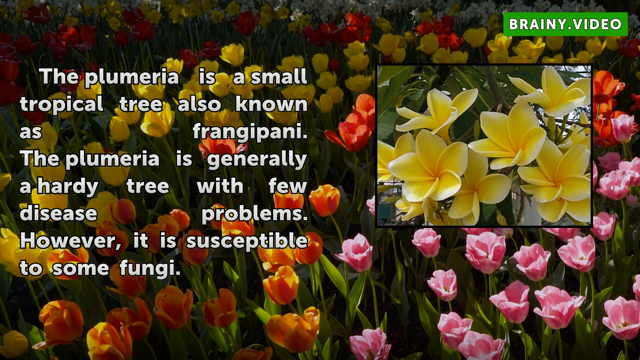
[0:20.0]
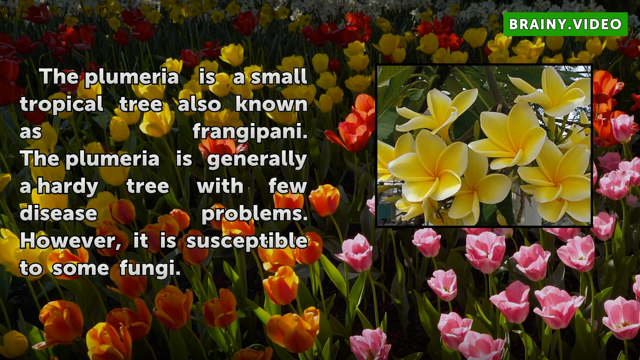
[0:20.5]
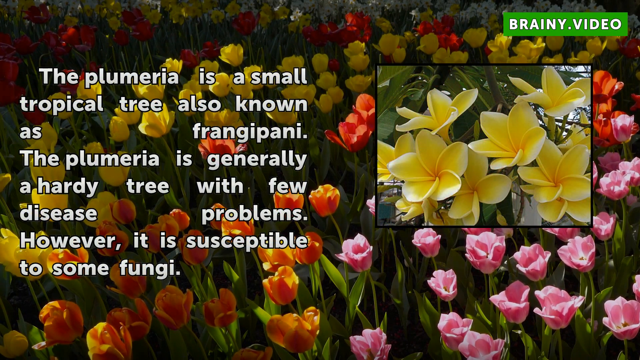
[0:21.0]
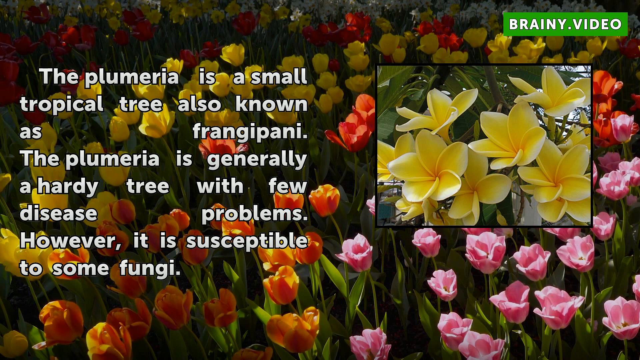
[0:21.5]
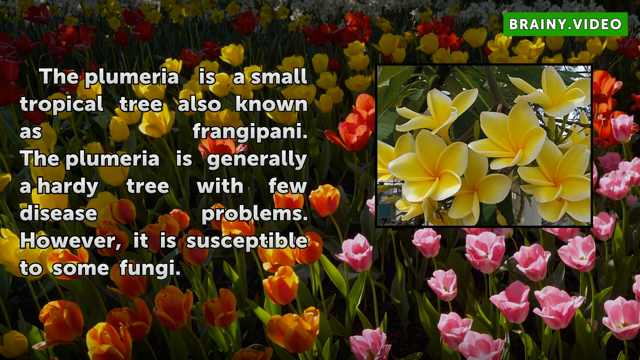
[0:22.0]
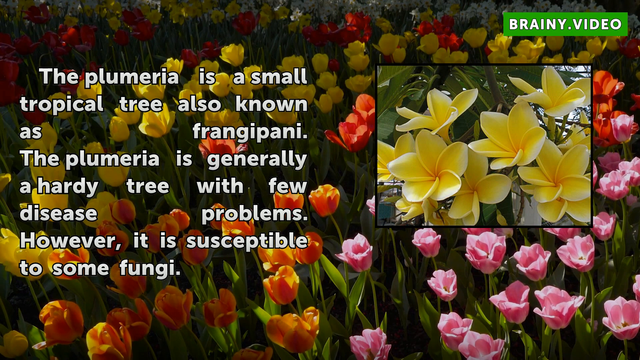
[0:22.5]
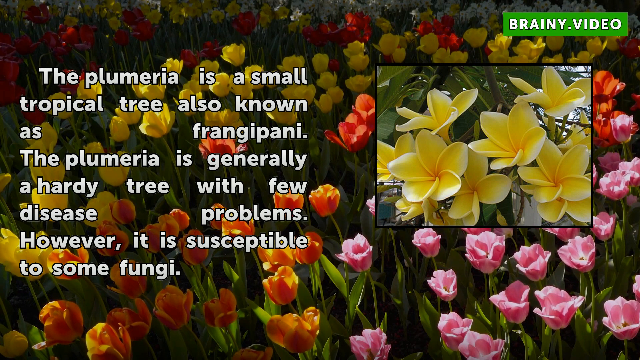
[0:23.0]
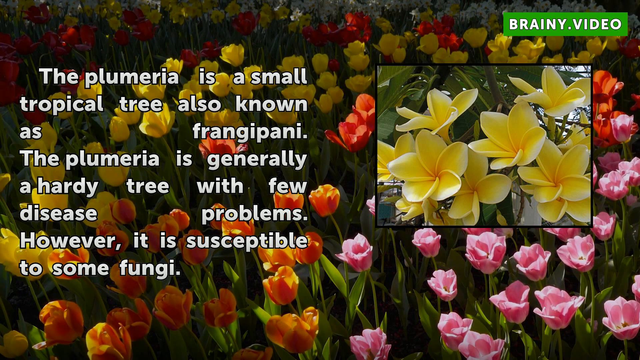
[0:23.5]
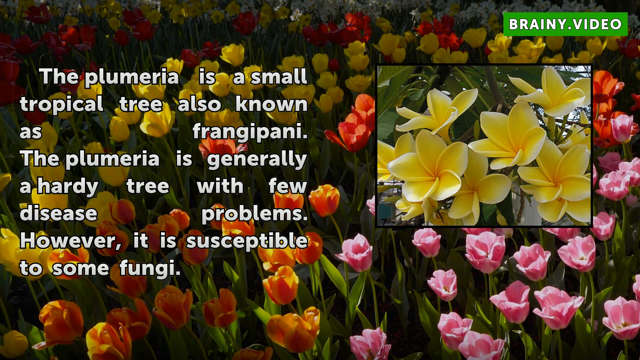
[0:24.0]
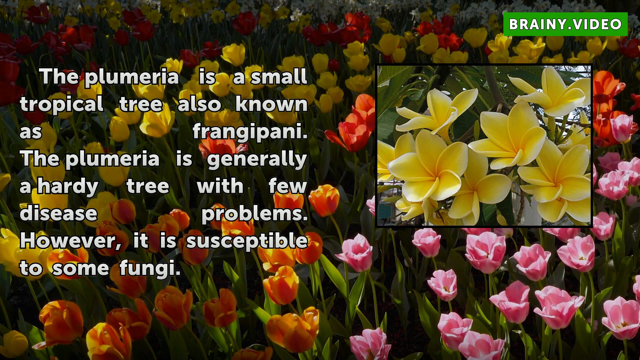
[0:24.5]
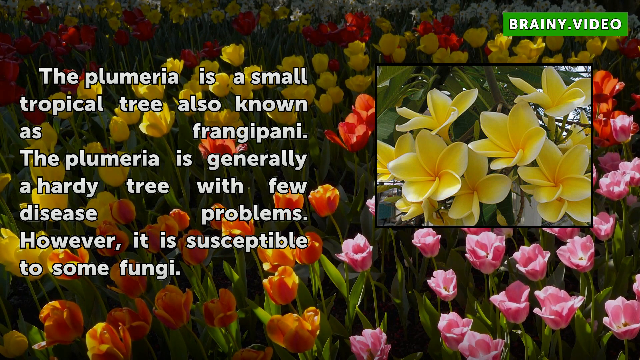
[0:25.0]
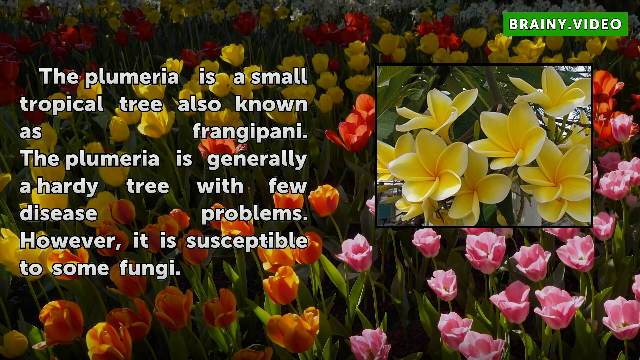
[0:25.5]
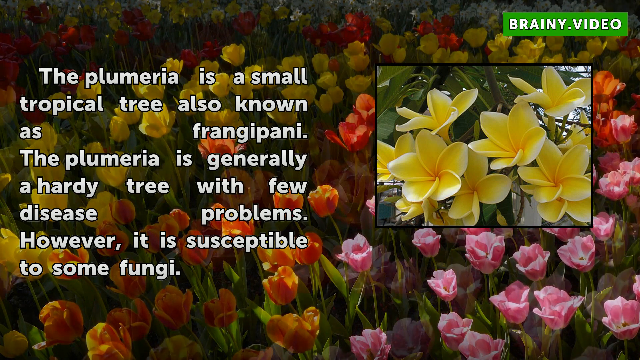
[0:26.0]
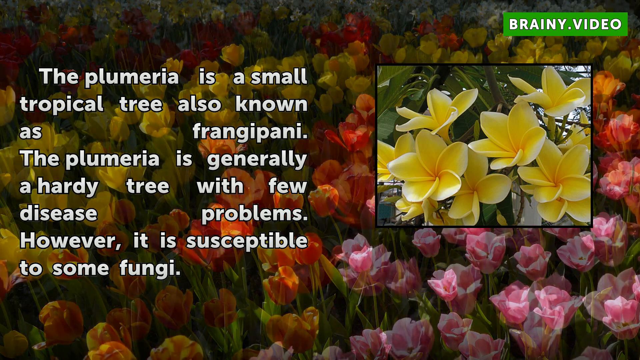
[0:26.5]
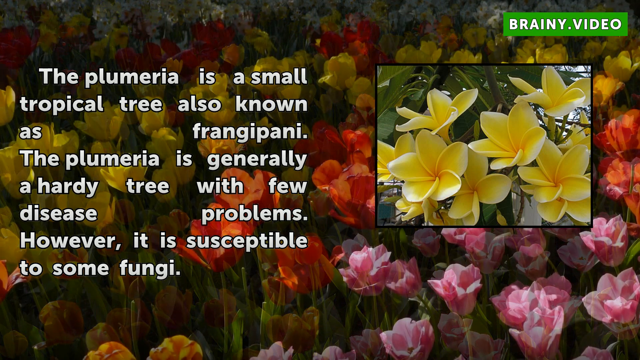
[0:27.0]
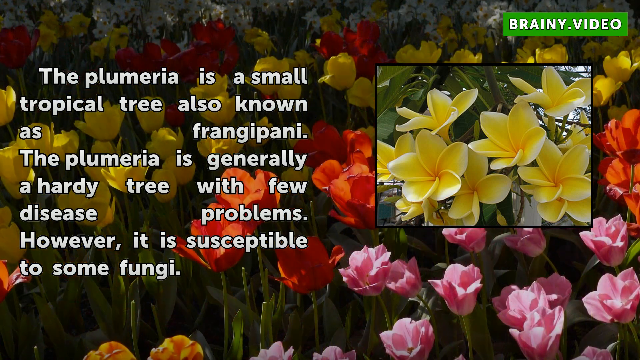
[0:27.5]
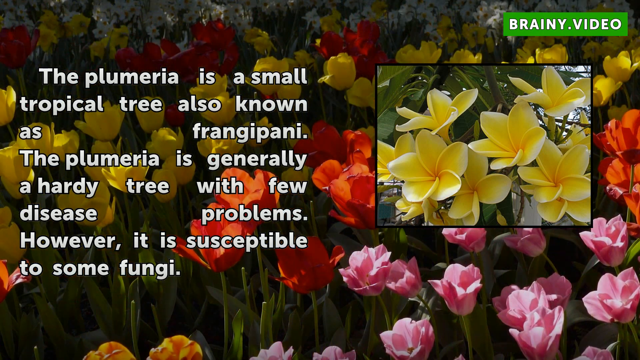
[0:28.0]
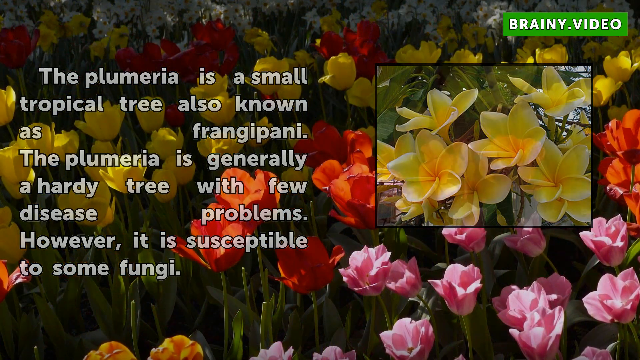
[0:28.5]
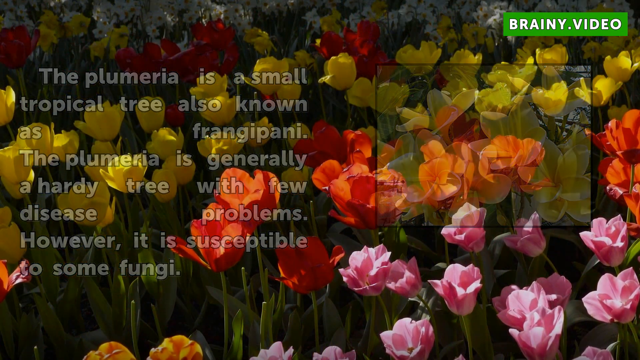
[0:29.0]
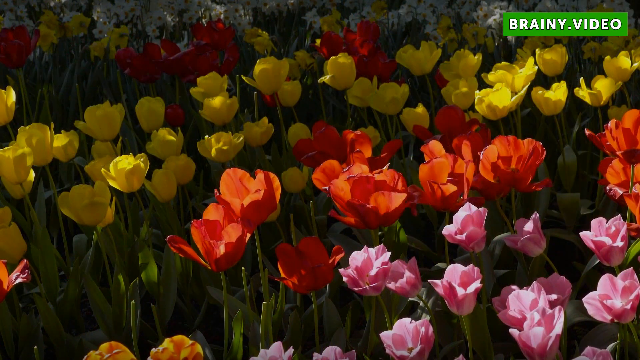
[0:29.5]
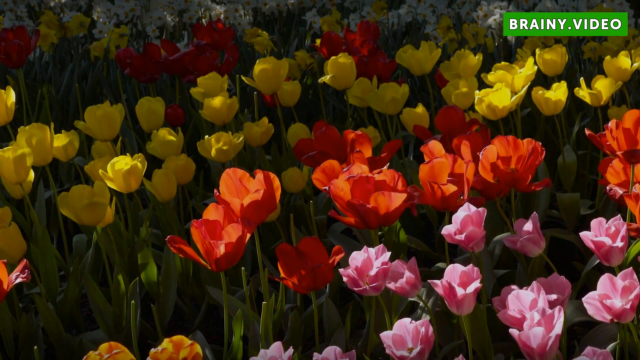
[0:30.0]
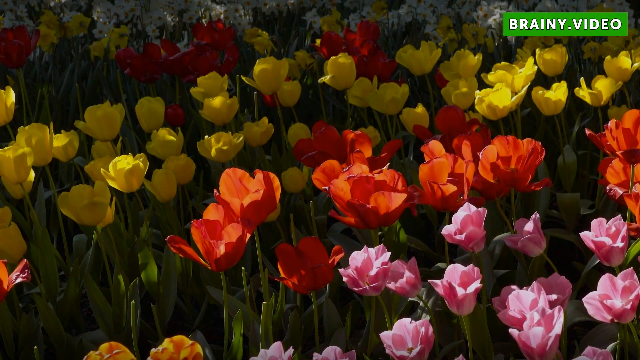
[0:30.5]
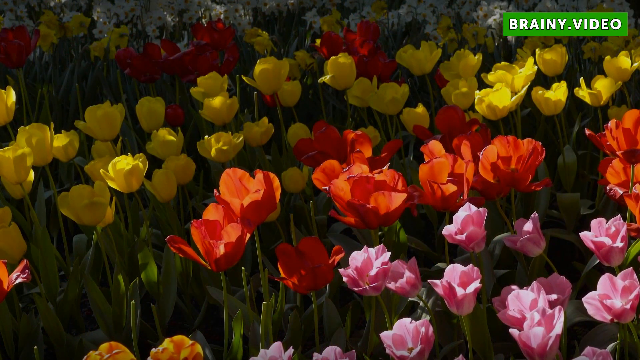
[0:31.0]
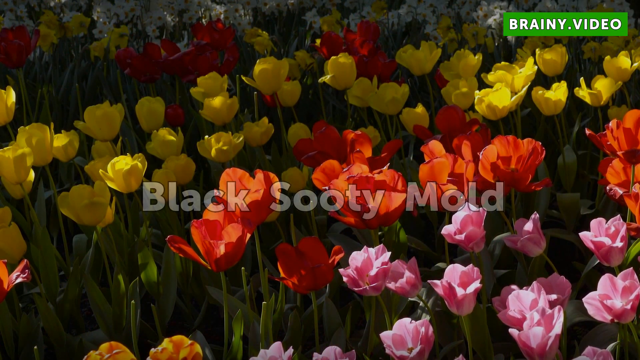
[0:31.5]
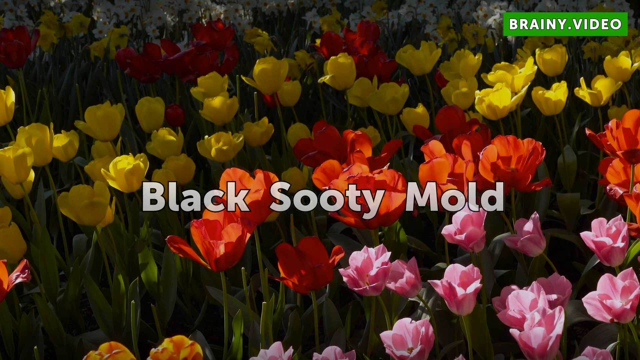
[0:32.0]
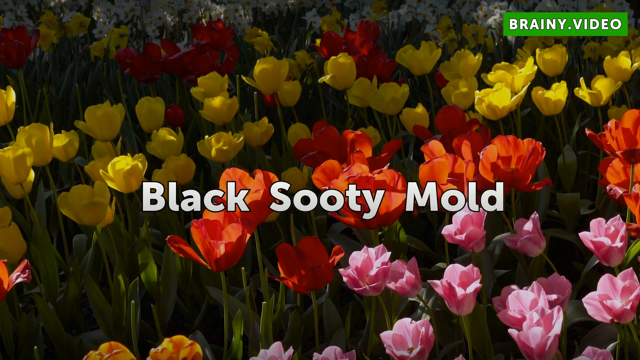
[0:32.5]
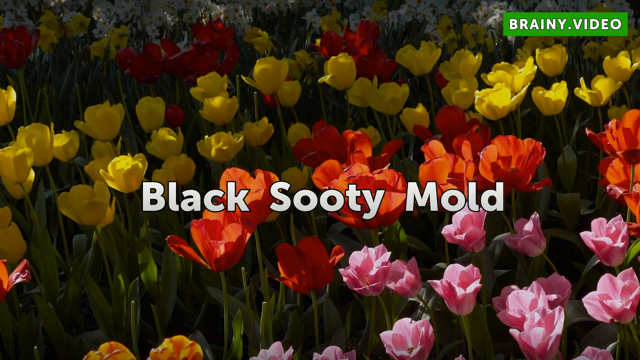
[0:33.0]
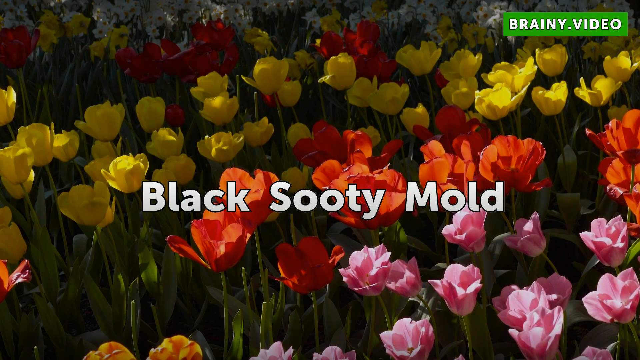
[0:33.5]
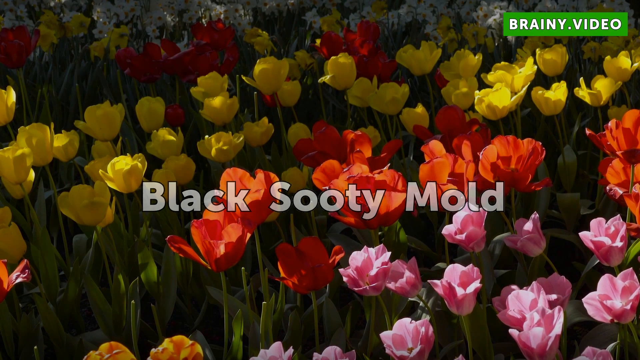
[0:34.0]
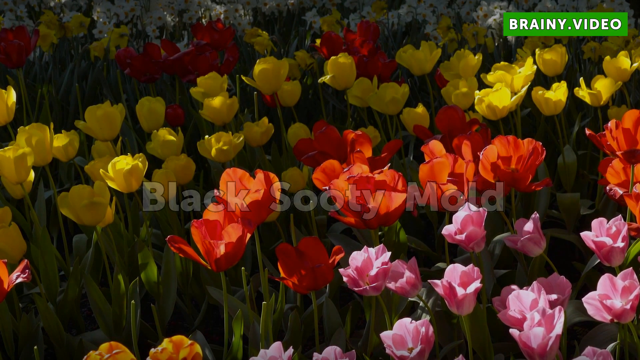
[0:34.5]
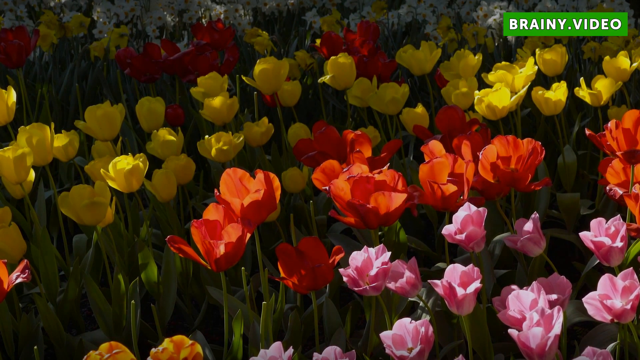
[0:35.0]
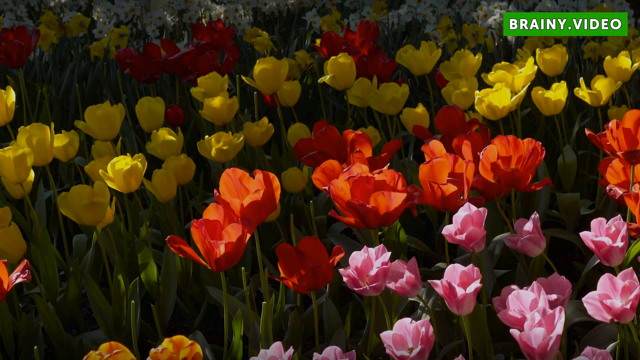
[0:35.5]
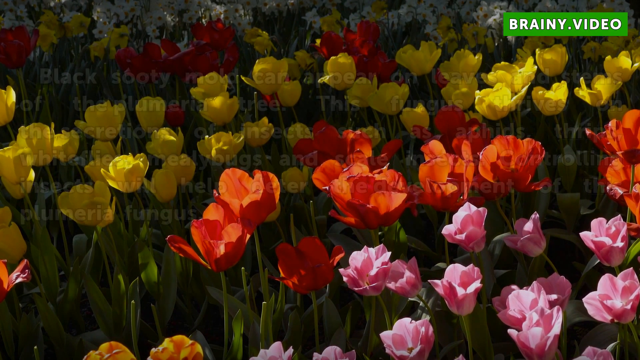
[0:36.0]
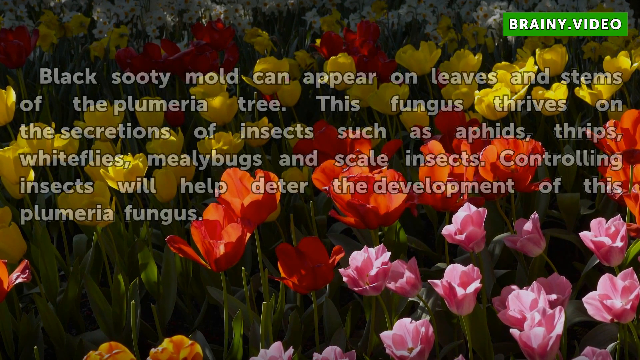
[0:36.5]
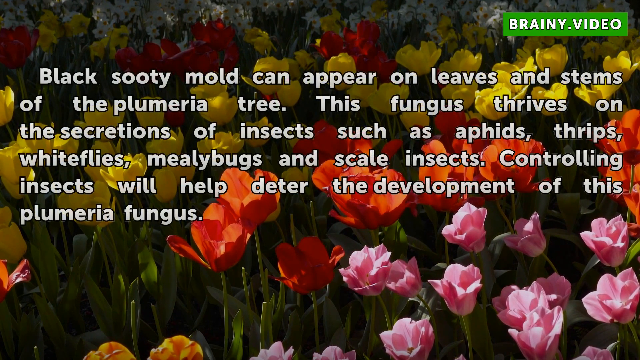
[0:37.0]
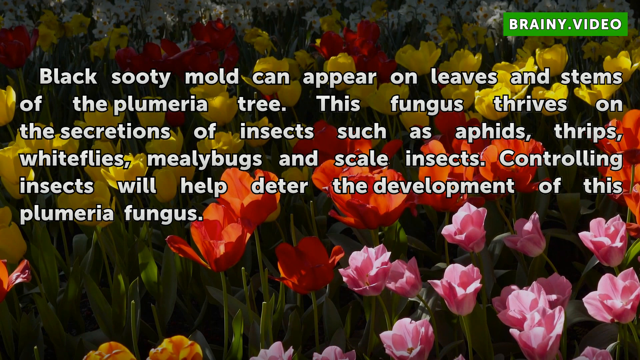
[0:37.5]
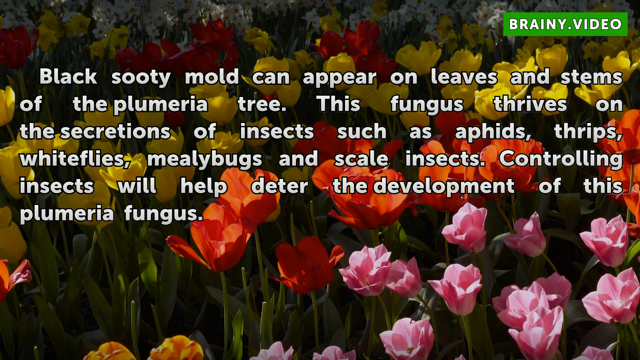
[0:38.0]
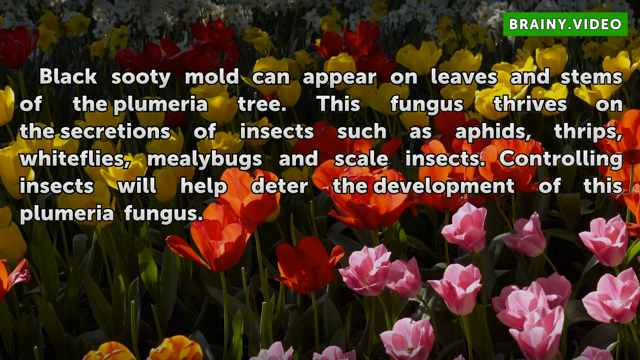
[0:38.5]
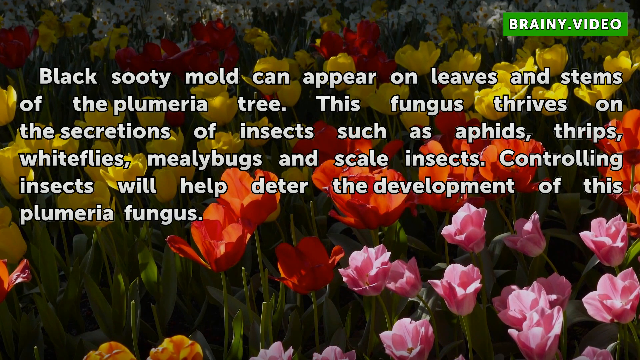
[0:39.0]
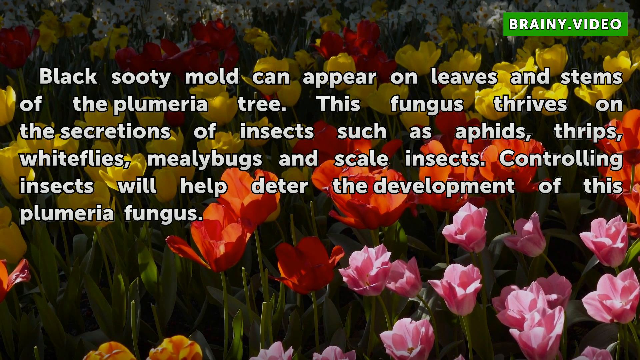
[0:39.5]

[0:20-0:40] The text continues to read: "The plumeria is a small tropical tree, also known as frangipani. The plumeria is generally a hardy tree with few disease problems. However, it is susceptible to some fungi." The tree in question is shown on screen. Further text covers black sooty mold: "black sooty mold can appear on leaves and stems of the plumeria tree. This fungus thrives on the secretion of insects such as aphids, thrips, whiteflies, mealybugs, and scale insects. Controlling insects will help deter the development of this plumeria fungus."